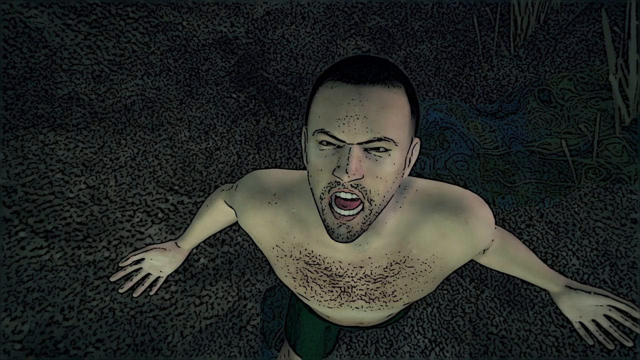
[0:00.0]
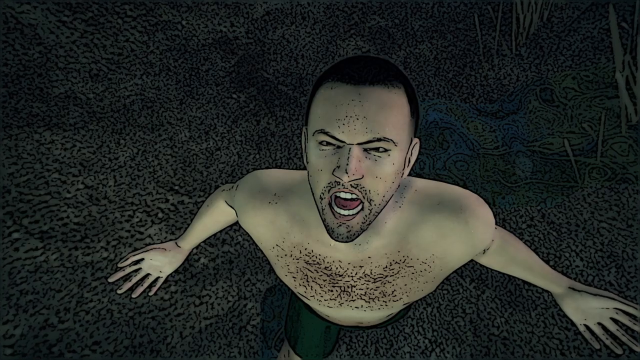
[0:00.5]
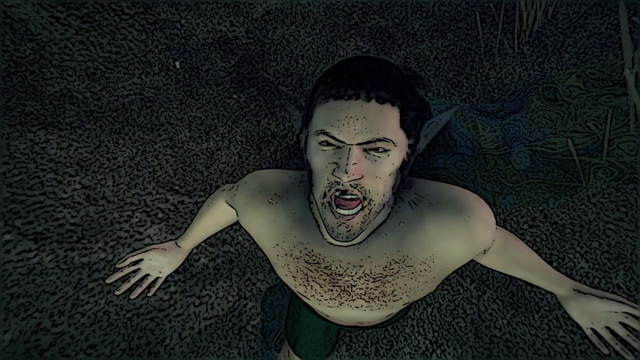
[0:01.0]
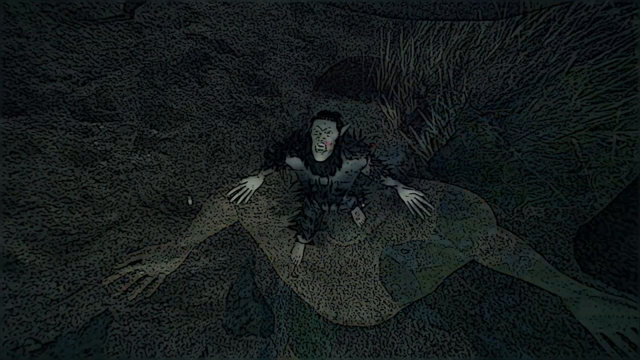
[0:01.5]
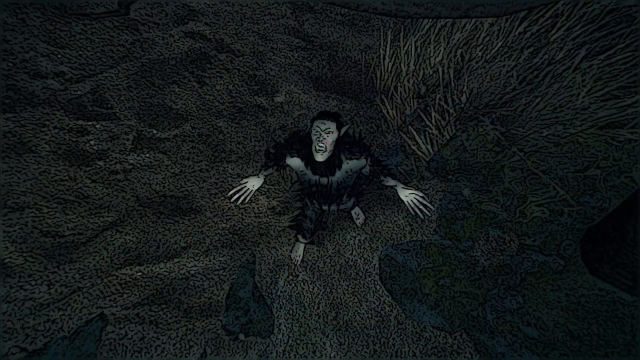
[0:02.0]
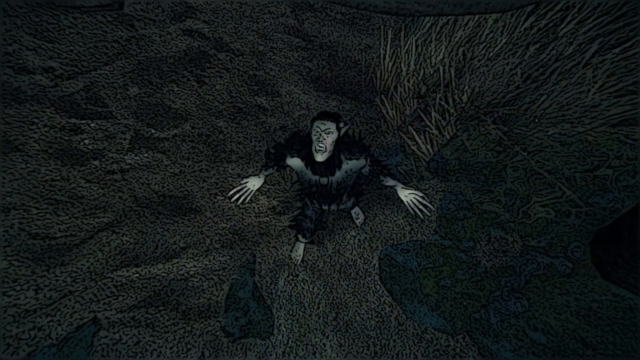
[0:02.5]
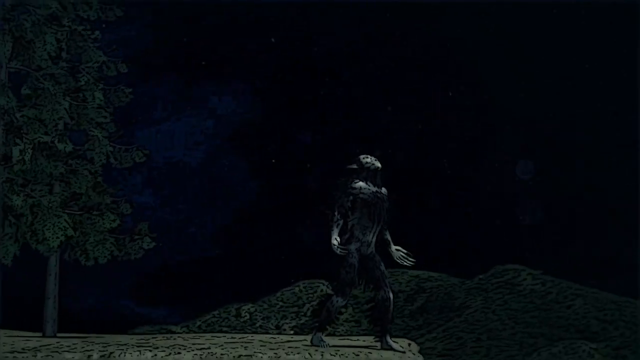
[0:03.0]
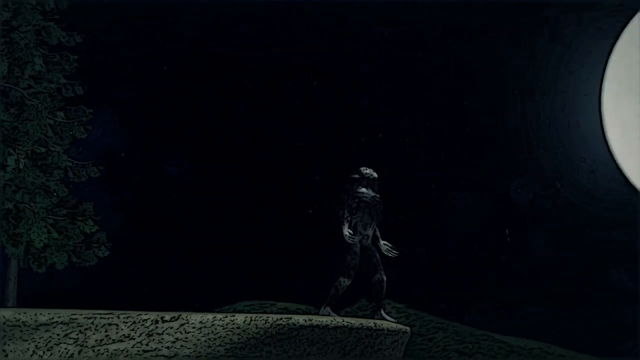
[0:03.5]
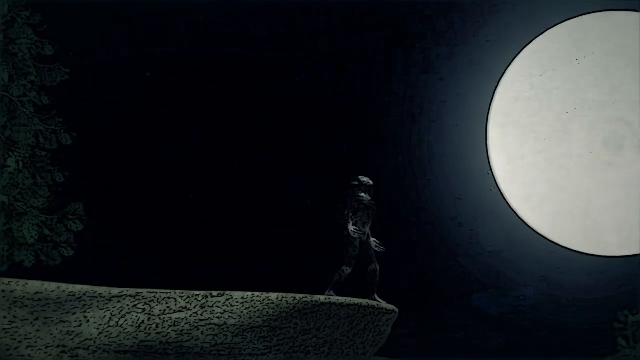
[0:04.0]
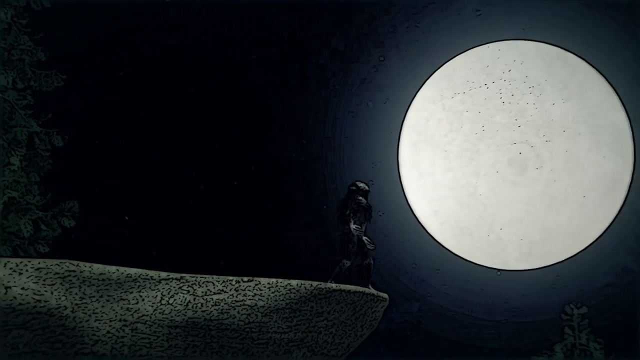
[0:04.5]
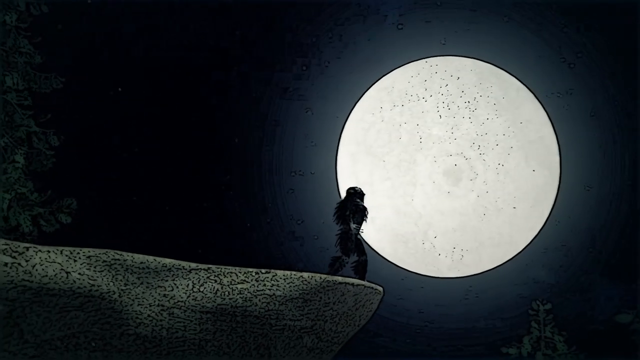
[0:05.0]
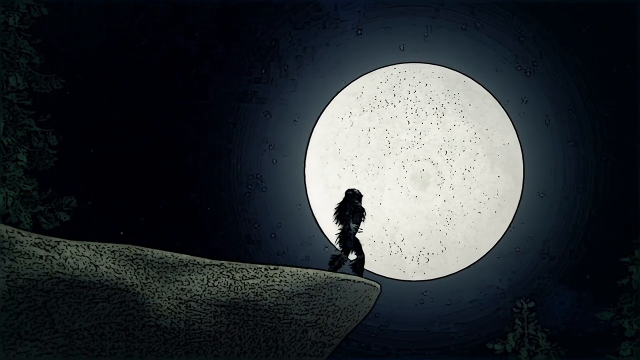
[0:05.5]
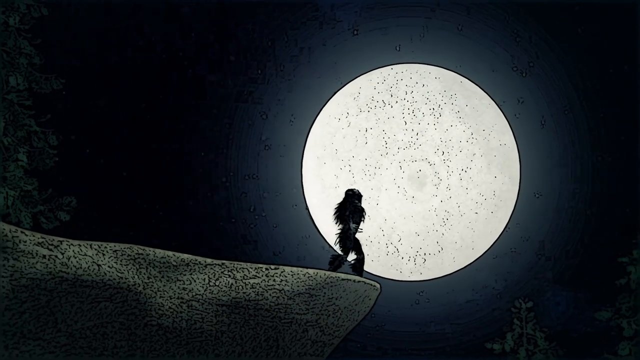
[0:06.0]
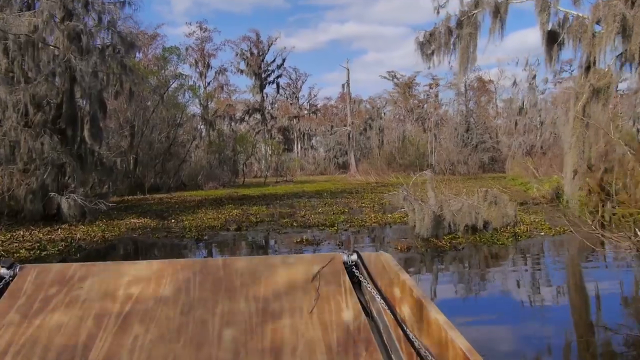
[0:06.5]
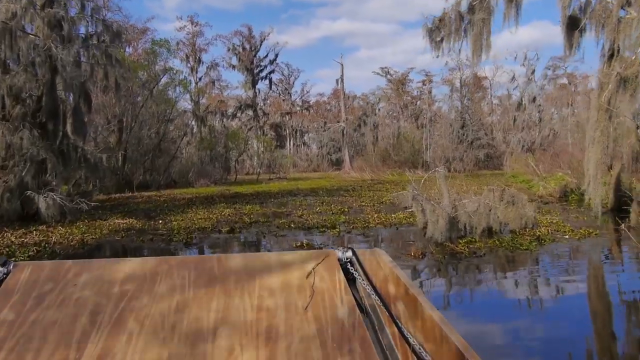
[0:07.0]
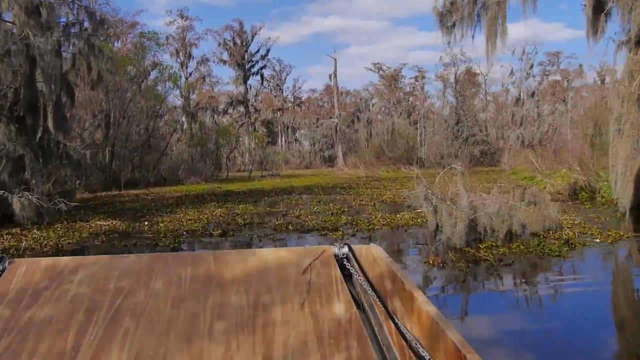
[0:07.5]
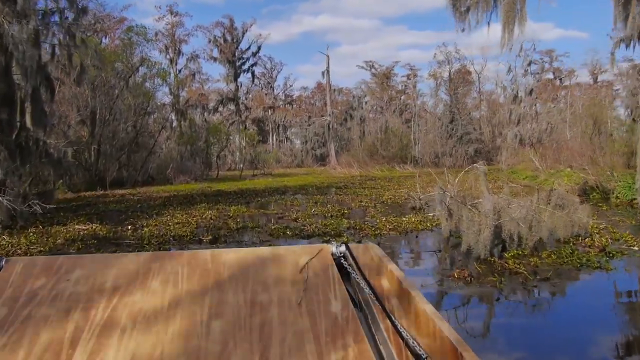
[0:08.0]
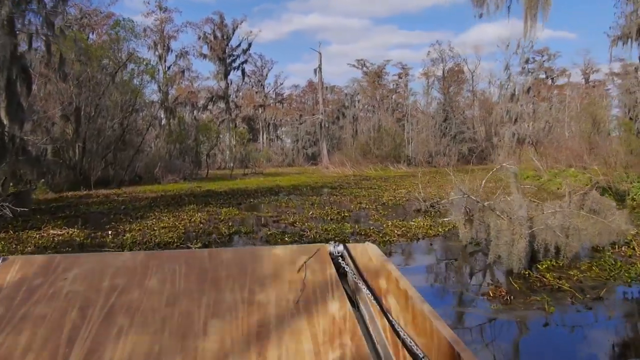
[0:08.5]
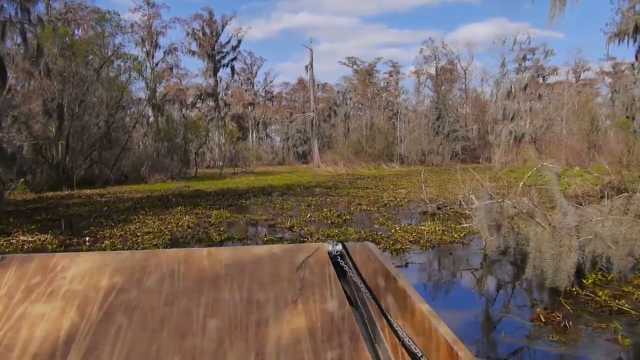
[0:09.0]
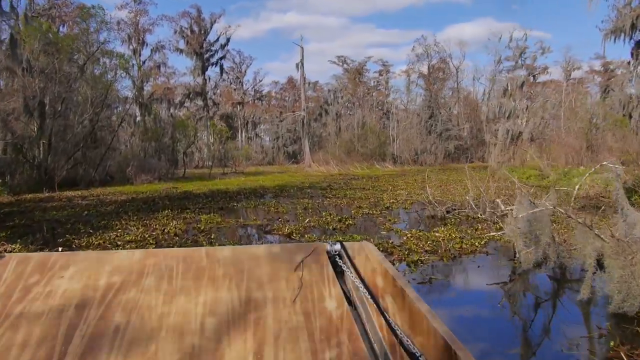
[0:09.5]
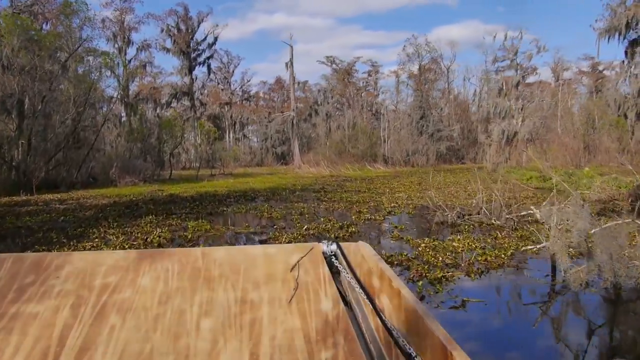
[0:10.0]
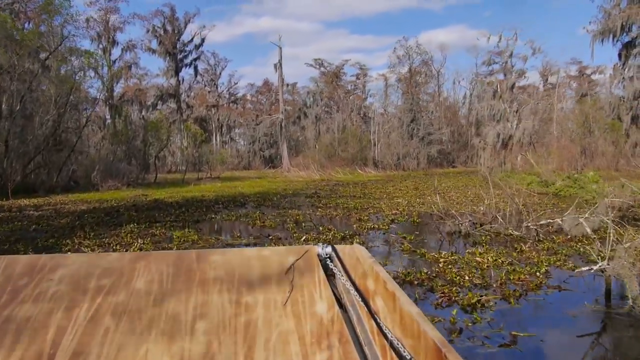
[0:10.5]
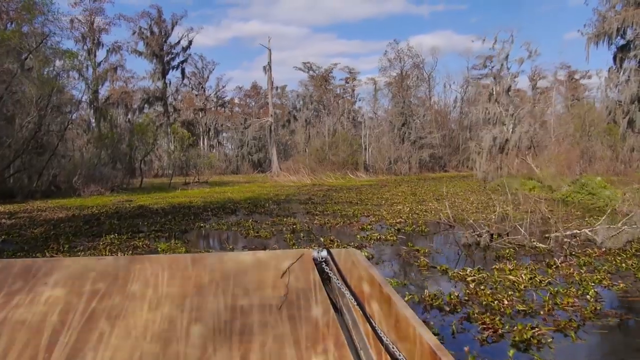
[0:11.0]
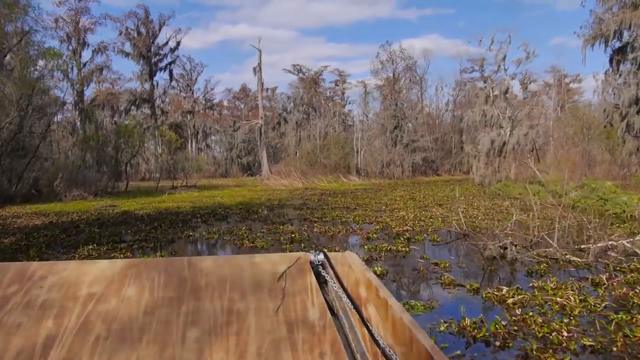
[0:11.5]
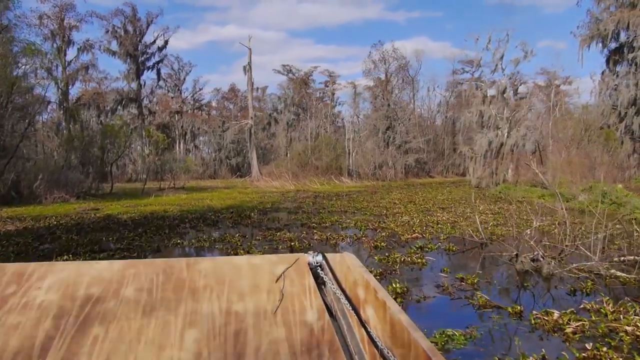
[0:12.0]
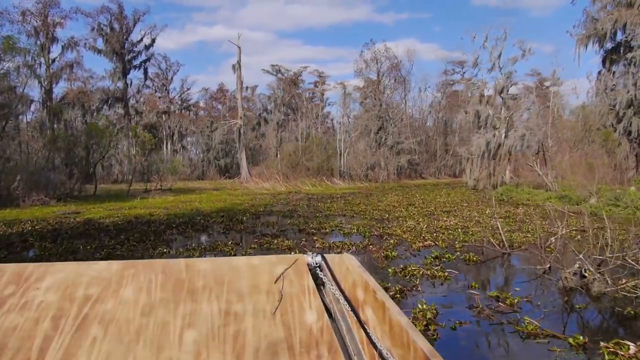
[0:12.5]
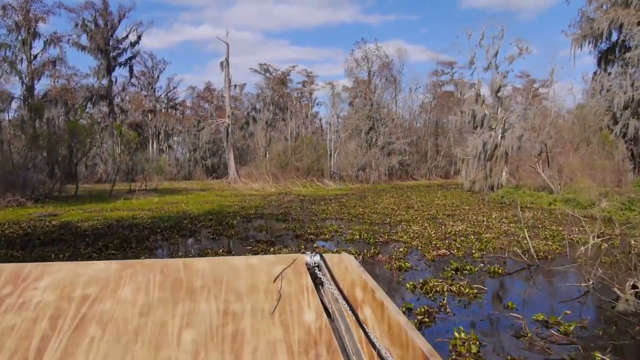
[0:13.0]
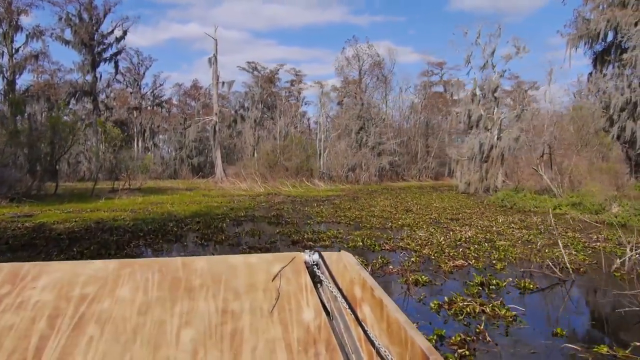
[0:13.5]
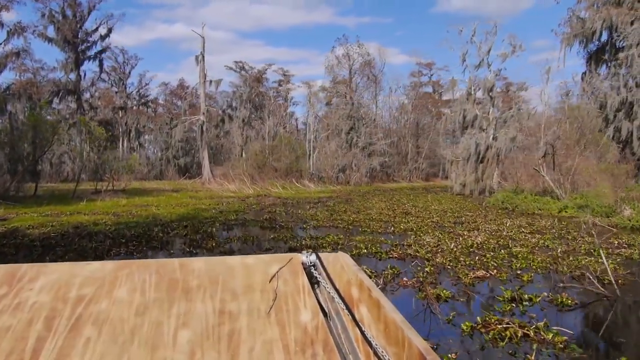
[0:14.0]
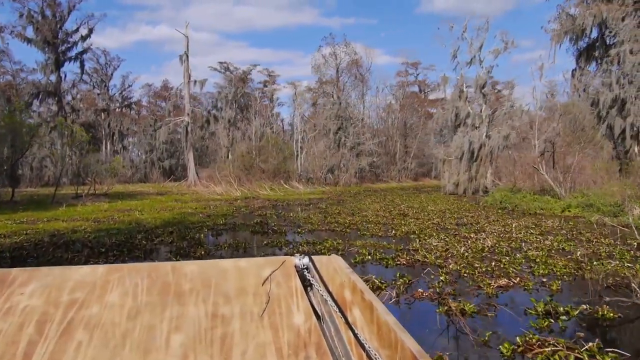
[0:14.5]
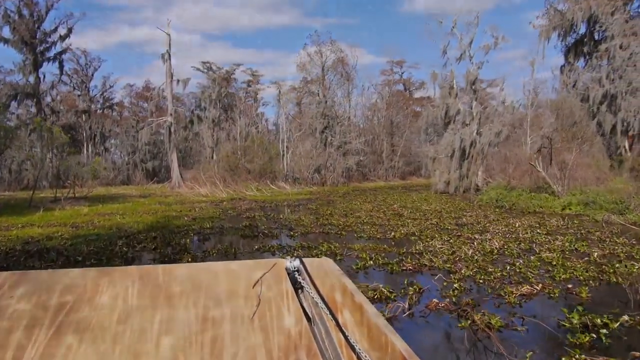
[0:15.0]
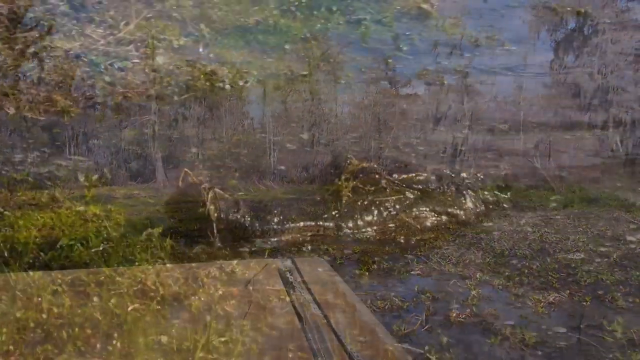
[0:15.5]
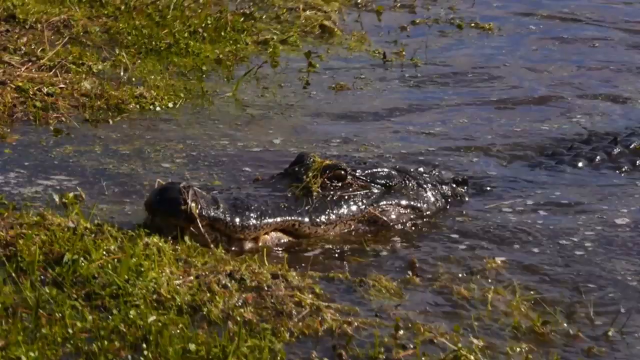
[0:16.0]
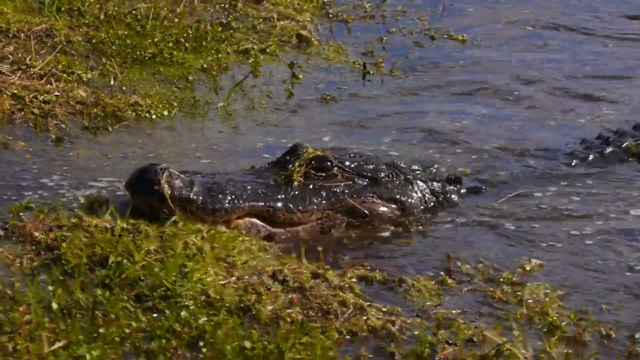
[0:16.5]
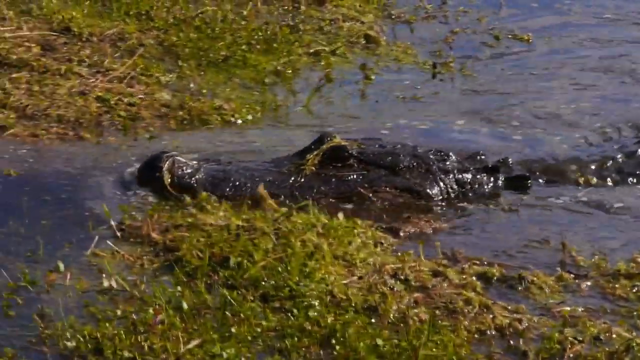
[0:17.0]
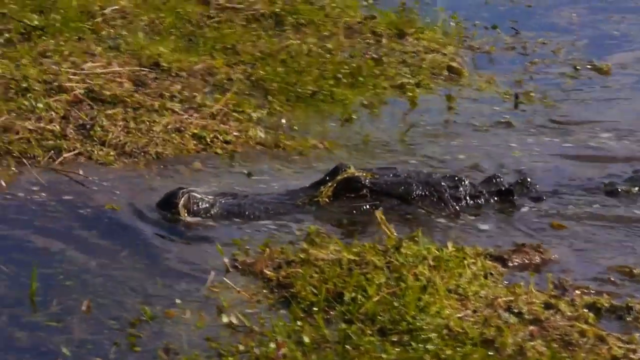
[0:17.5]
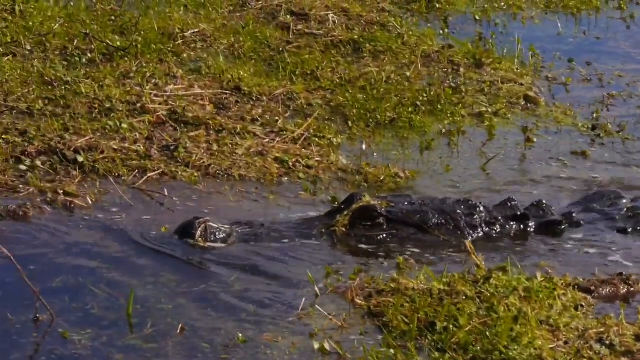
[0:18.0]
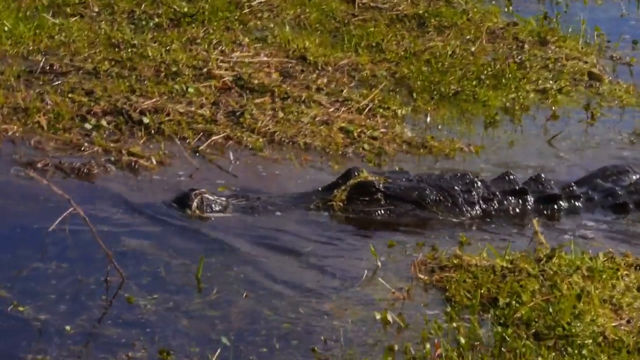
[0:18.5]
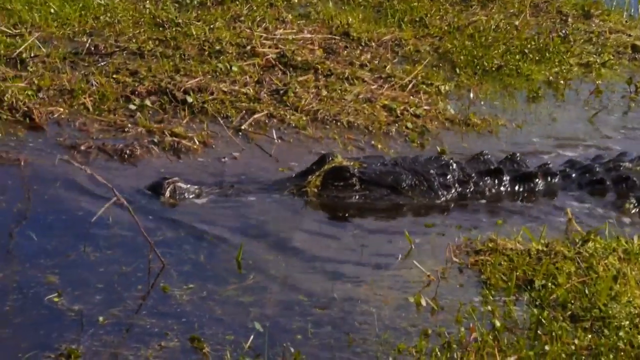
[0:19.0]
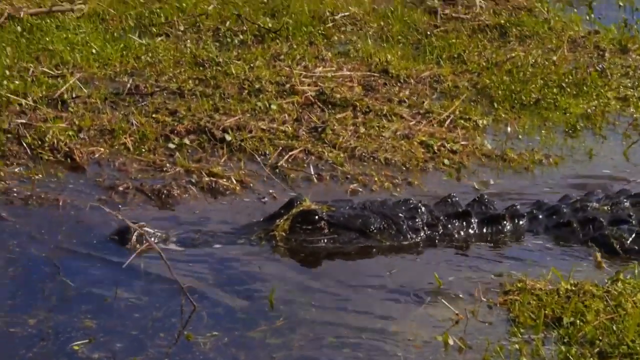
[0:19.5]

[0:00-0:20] An animation shows a man standing and looking up as hair starts to grow on him, as though he is turning into a werewolf. A panoramic angle goes around him, with a full moon behind him. Then something appears to be driving through a bog or marsh. A real alligator pops out of the water and seems to look around, in what looks like the Everglades or a bayou down south in Louisiana. Algae and other matter float on top of the water, and trees are visible. The alligator lurks in the swamp, pops its eyes out to look out of the water, and swims around.